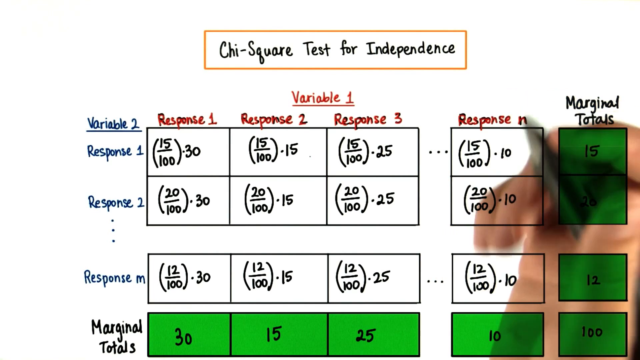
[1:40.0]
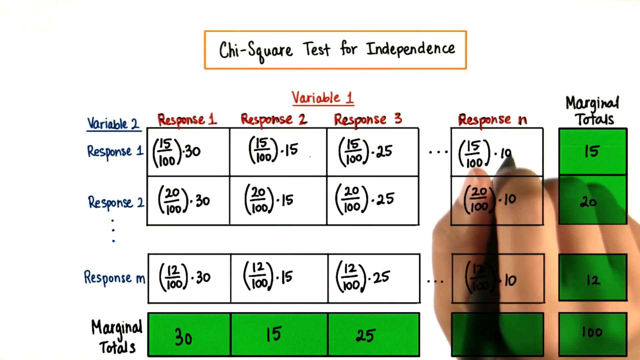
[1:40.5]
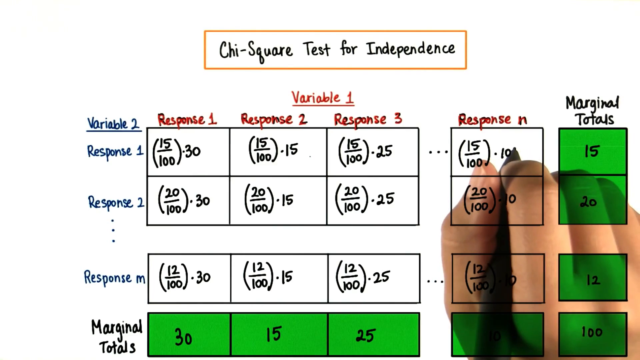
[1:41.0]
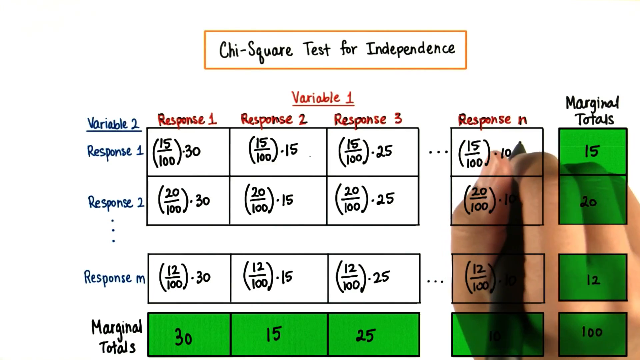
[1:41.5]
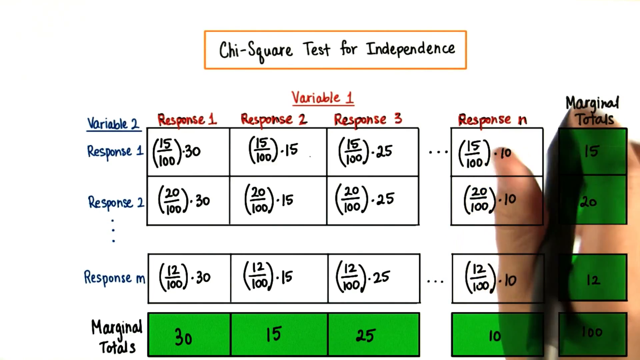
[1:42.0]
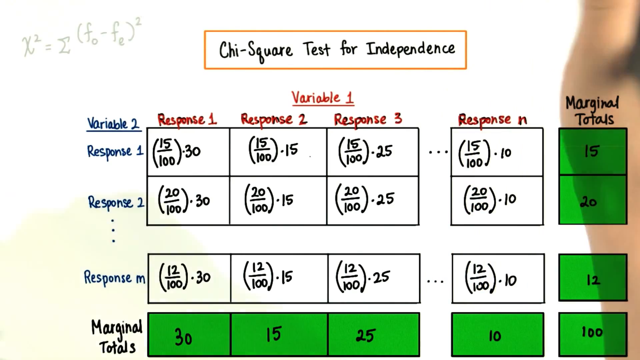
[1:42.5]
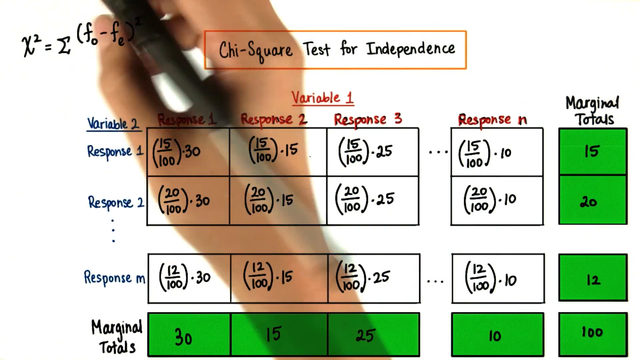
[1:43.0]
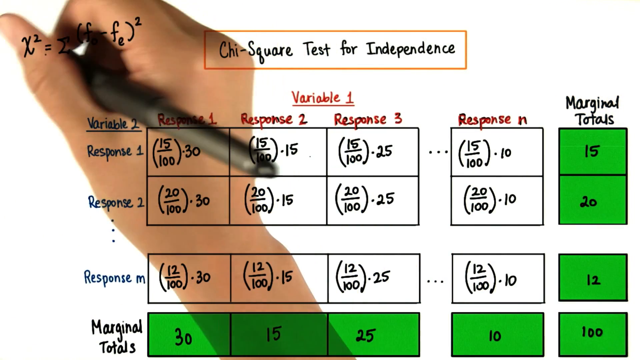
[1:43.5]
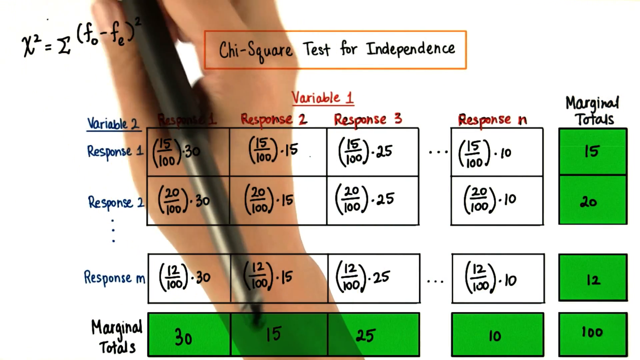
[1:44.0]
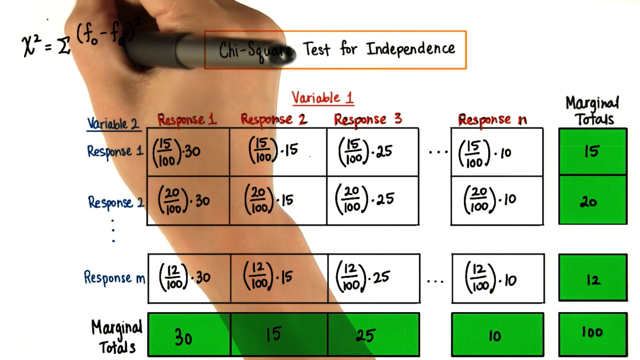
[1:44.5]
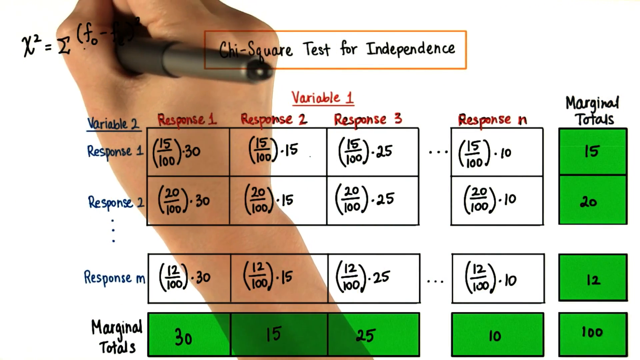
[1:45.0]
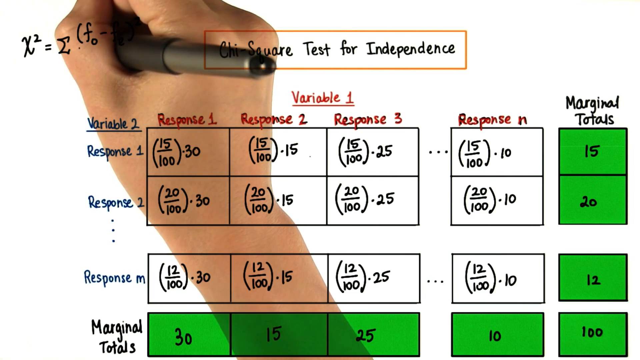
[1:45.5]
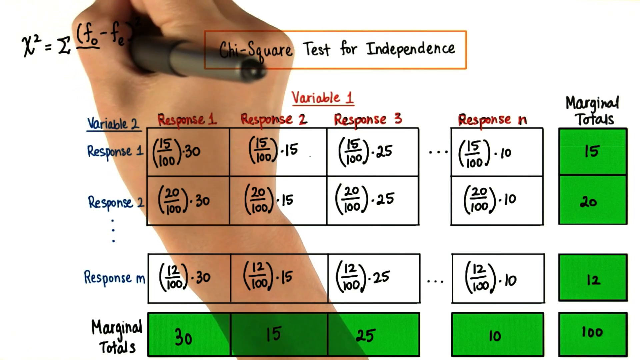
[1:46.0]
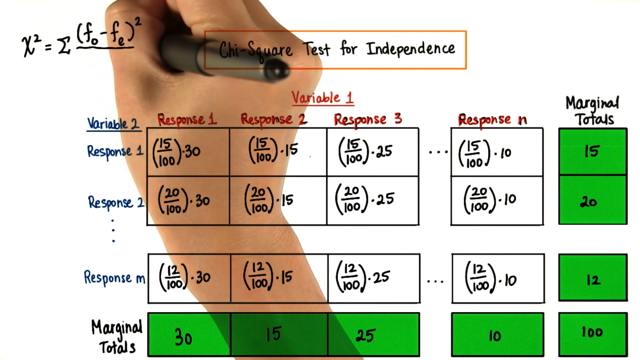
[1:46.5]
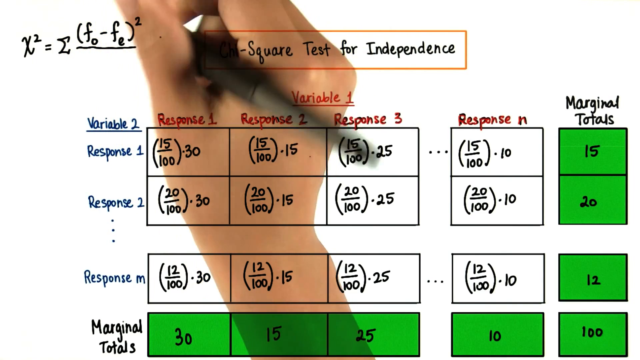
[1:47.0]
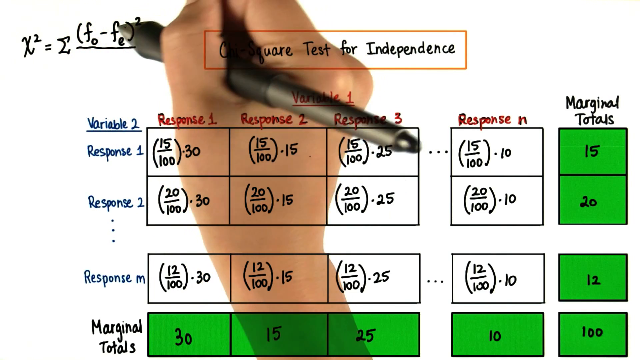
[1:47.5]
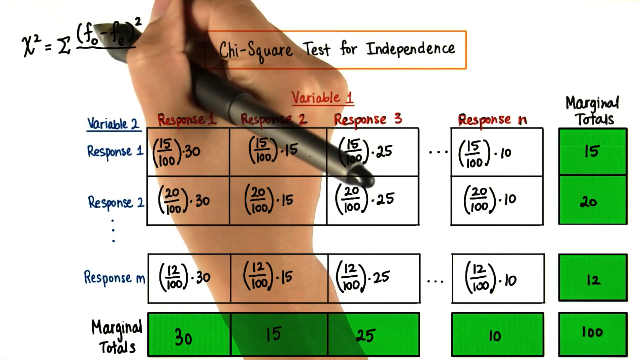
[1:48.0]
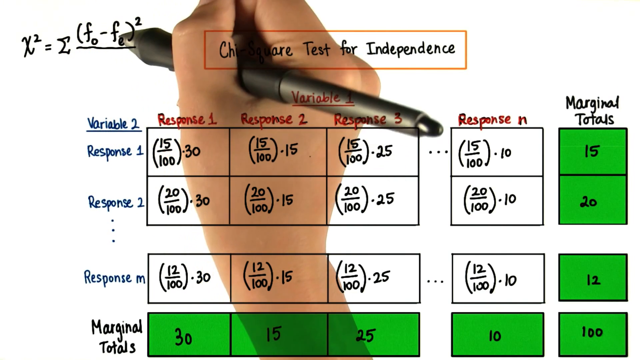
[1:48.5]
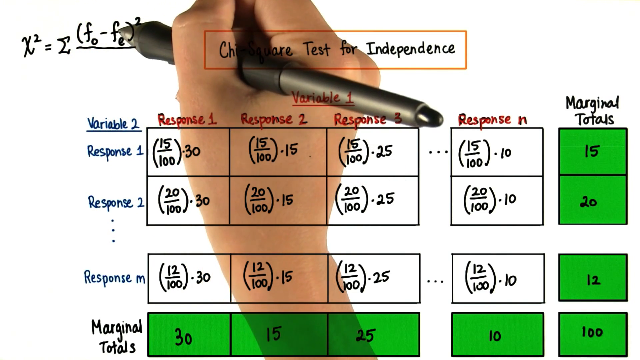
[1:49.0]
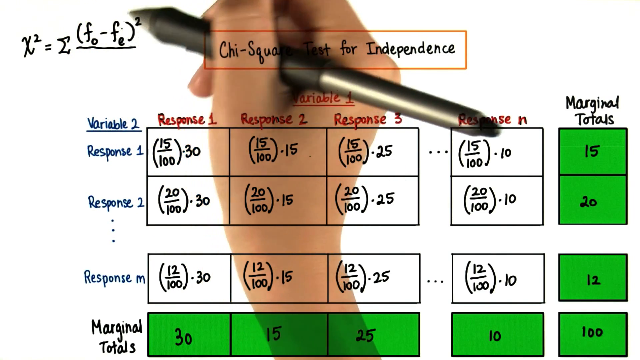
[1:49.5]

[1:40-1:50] The person continues writing on the board. At the top left it says x to the power of 2 equals, followed by an unidentified icon, then fo minus fe in parentheses, raised to the second power, and apparently divided by something. The tool he is using is a precise-looking black marker.